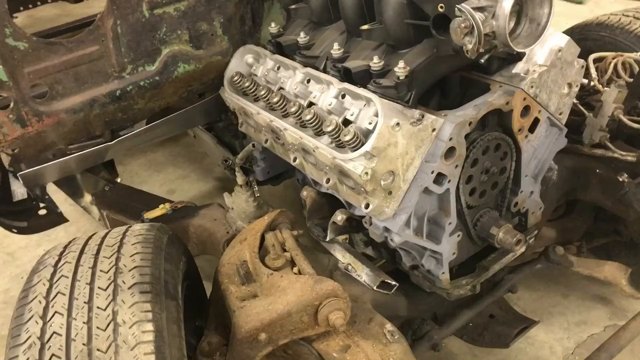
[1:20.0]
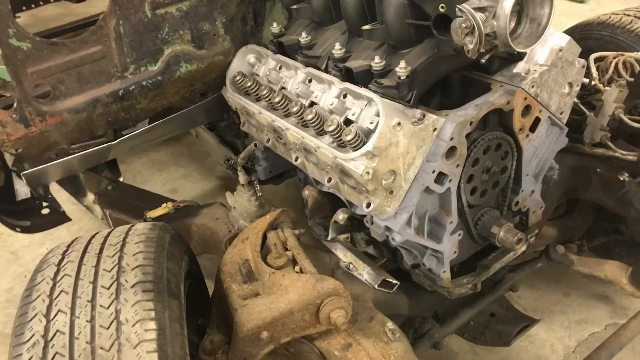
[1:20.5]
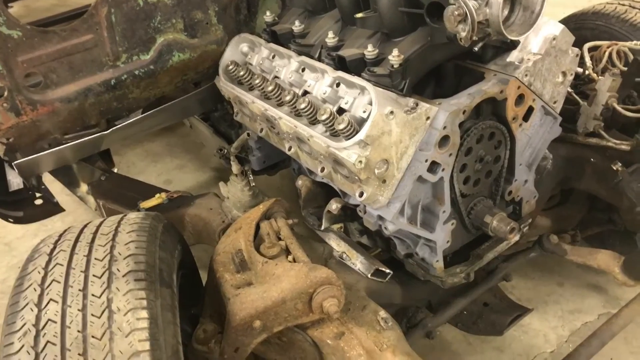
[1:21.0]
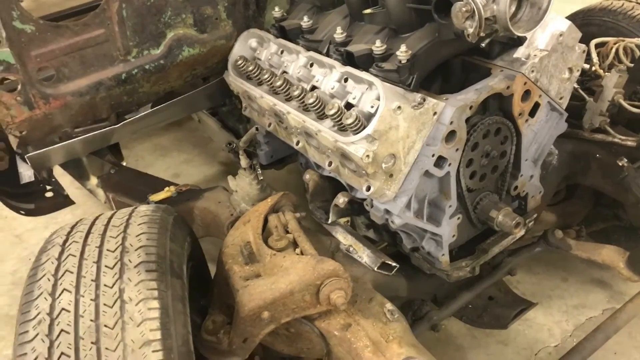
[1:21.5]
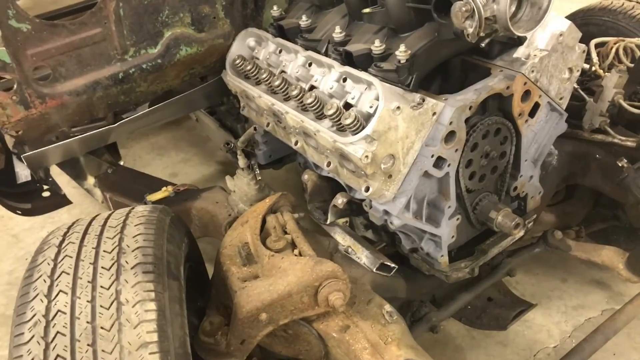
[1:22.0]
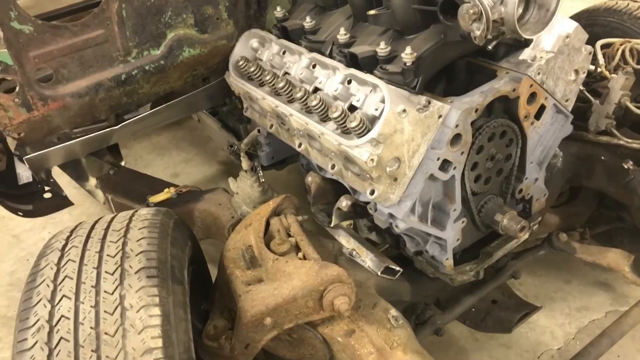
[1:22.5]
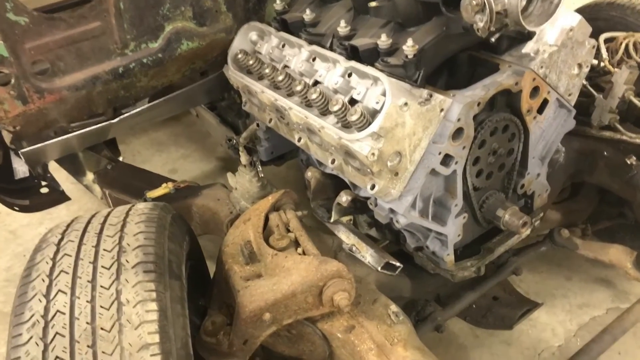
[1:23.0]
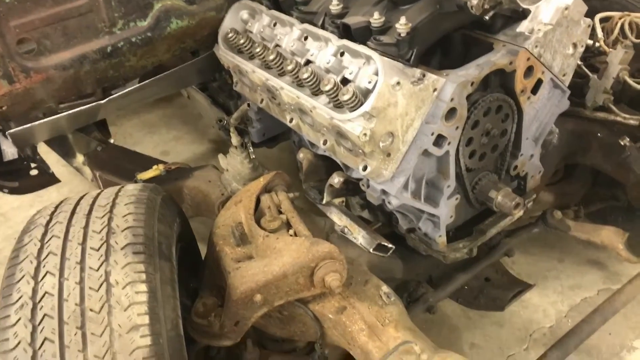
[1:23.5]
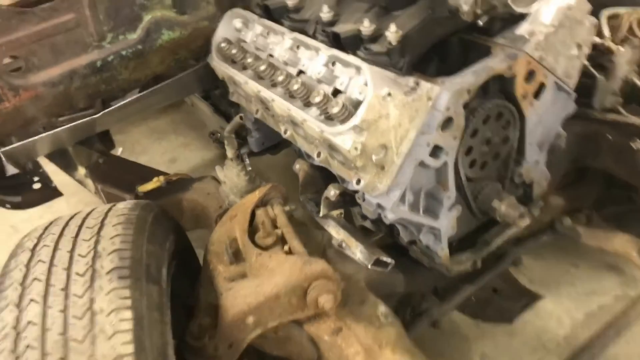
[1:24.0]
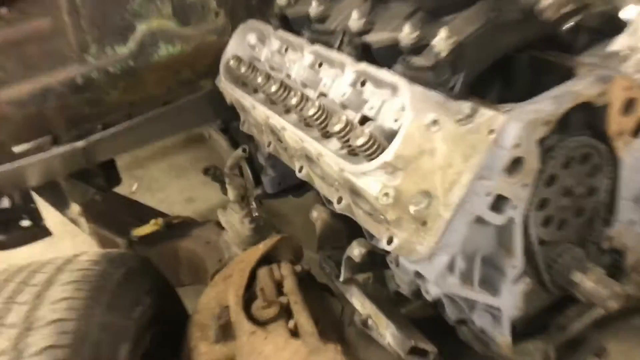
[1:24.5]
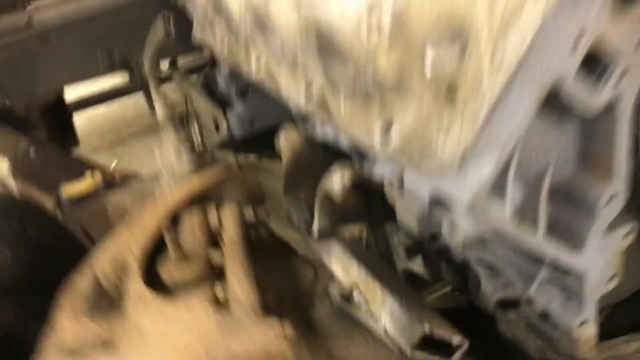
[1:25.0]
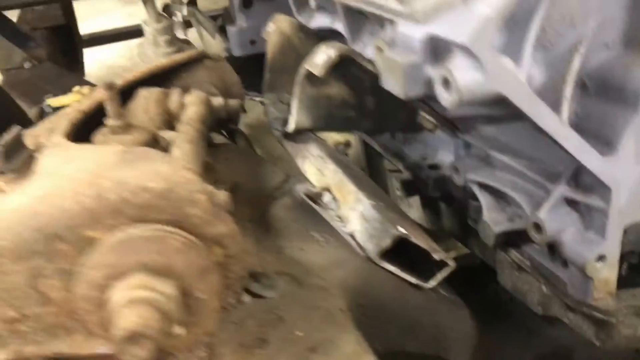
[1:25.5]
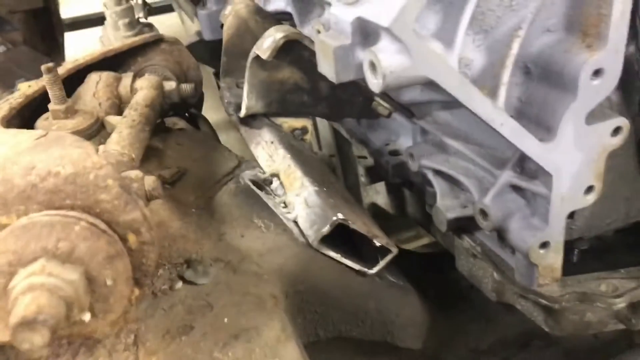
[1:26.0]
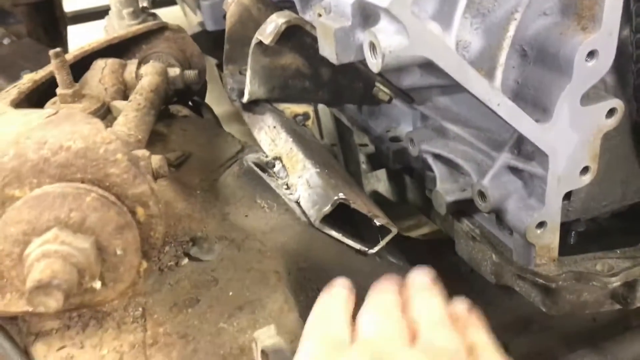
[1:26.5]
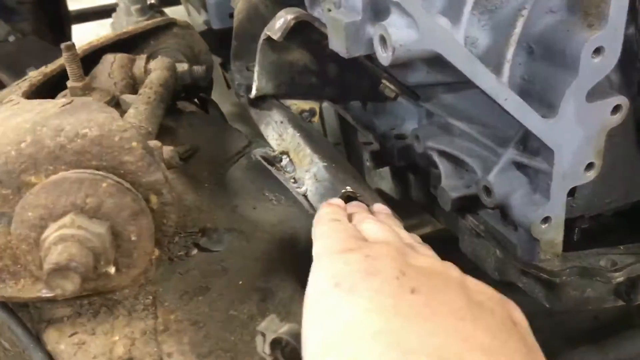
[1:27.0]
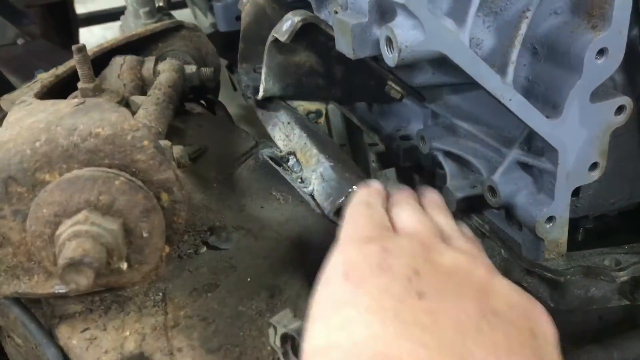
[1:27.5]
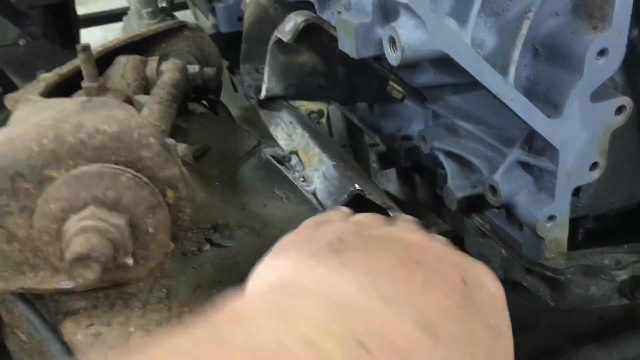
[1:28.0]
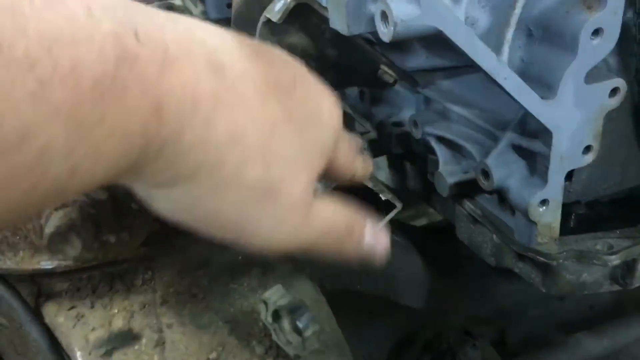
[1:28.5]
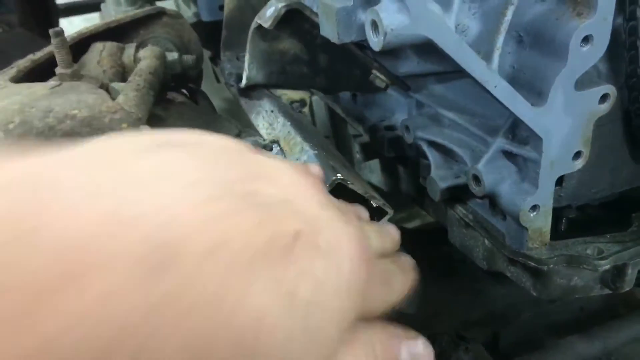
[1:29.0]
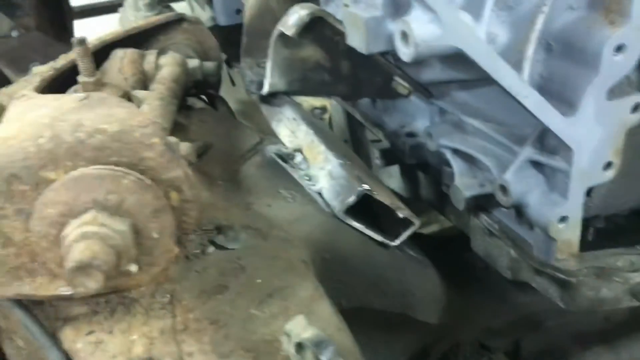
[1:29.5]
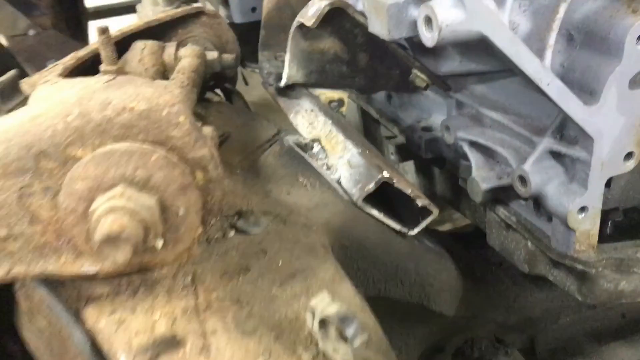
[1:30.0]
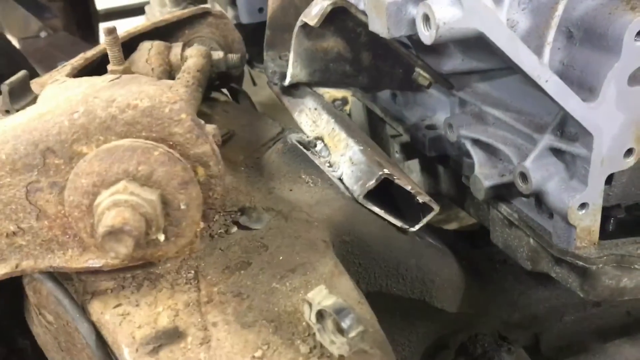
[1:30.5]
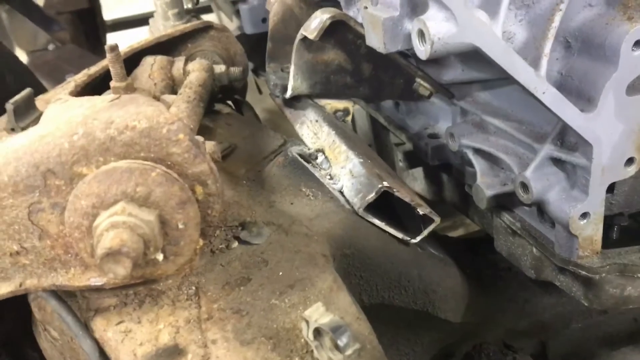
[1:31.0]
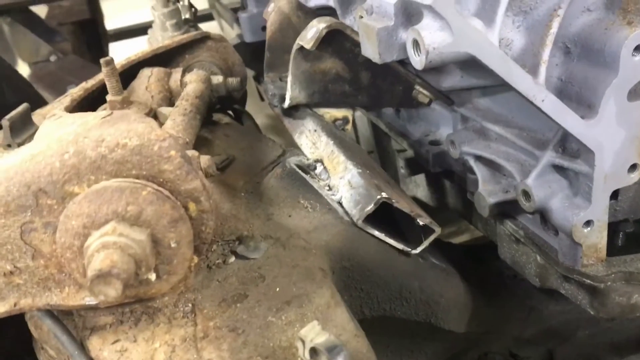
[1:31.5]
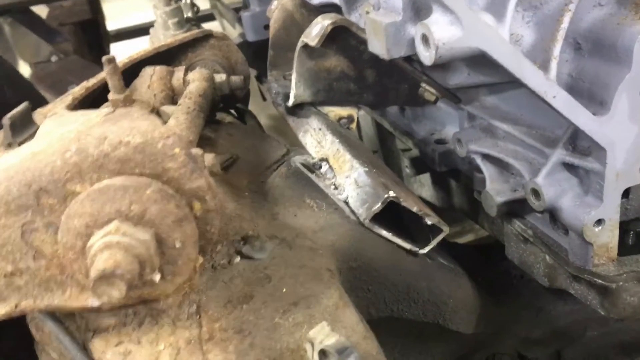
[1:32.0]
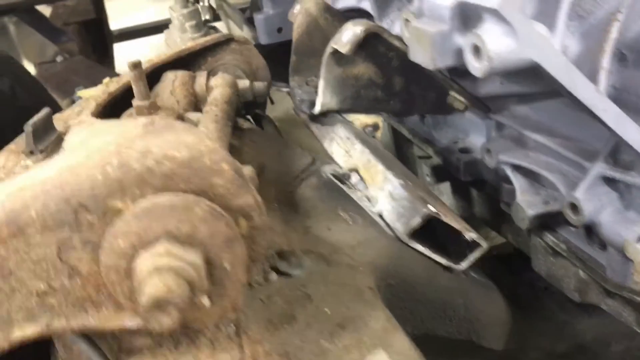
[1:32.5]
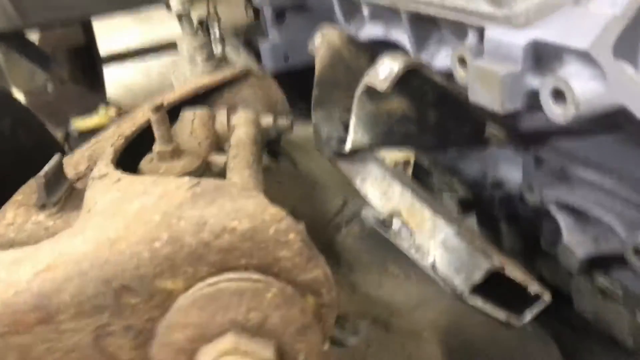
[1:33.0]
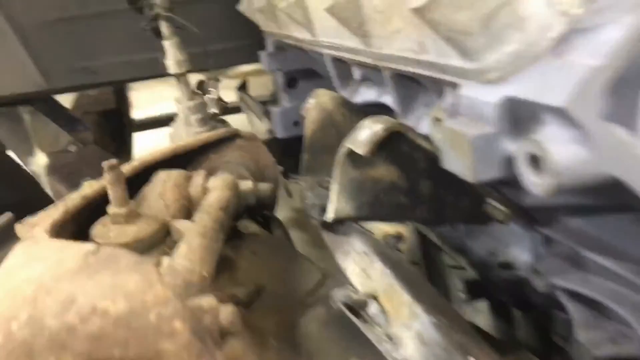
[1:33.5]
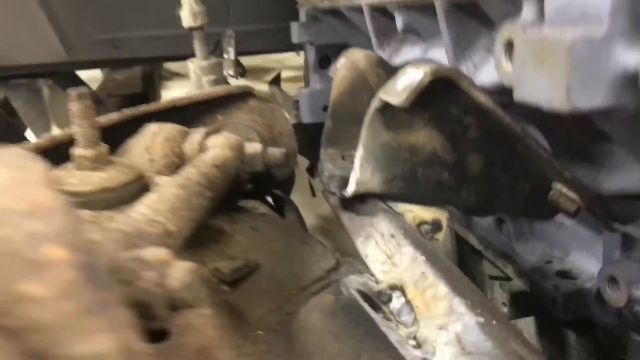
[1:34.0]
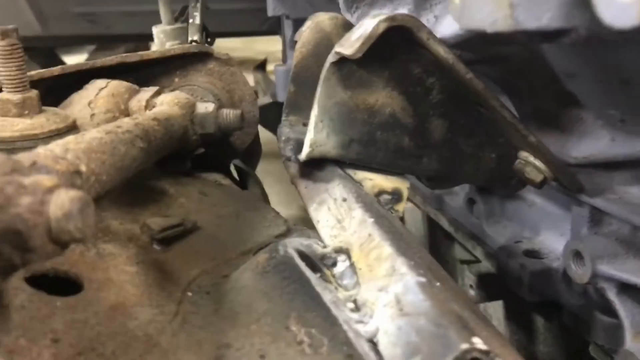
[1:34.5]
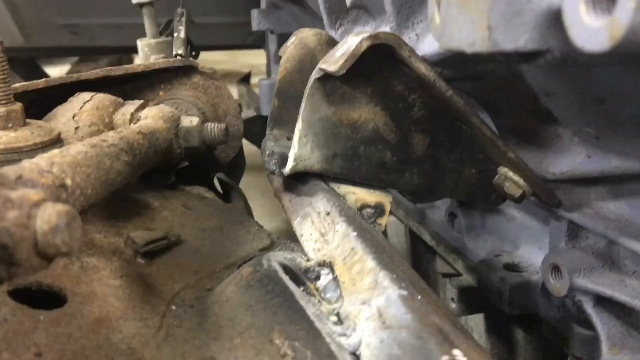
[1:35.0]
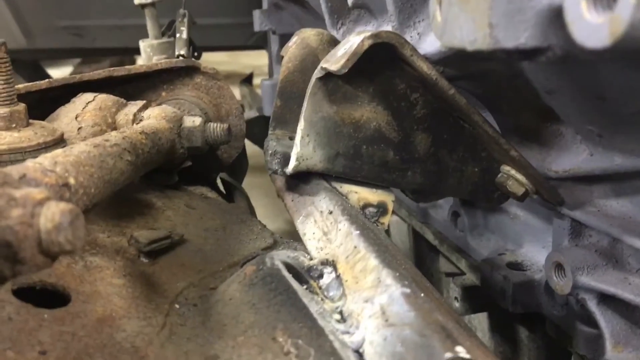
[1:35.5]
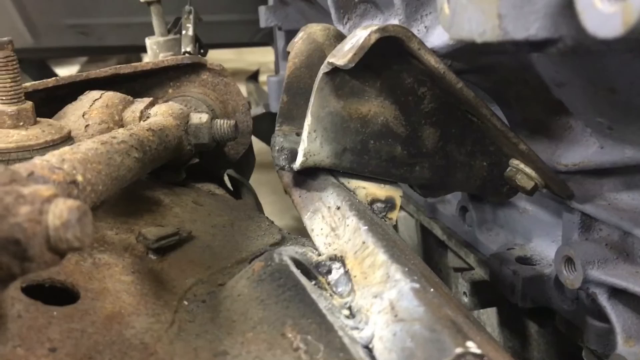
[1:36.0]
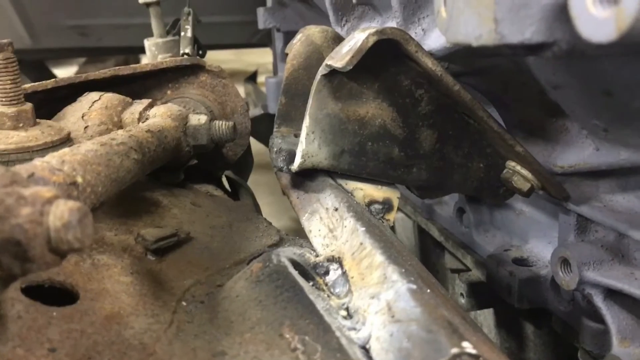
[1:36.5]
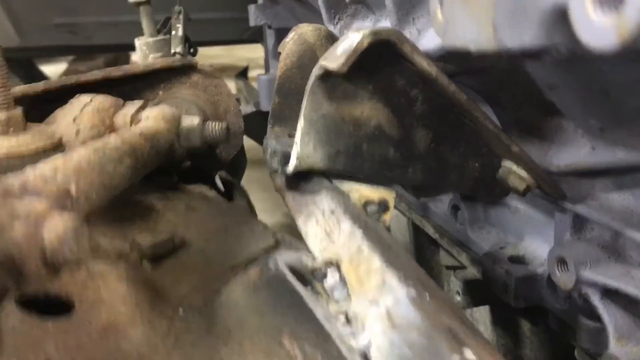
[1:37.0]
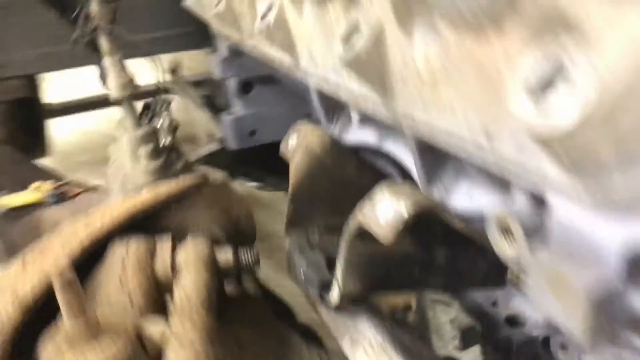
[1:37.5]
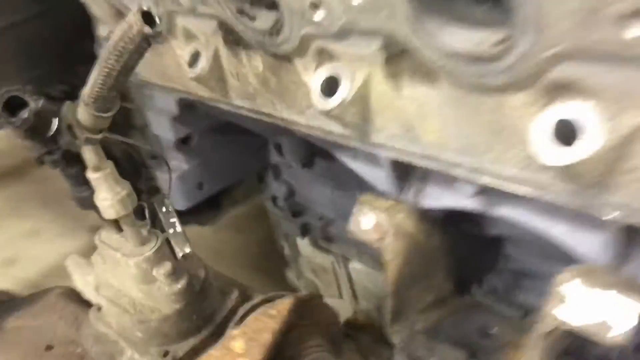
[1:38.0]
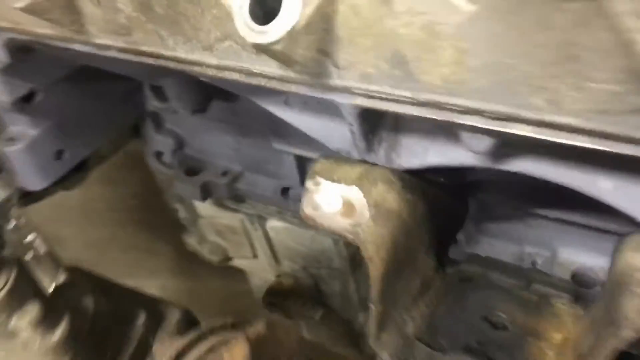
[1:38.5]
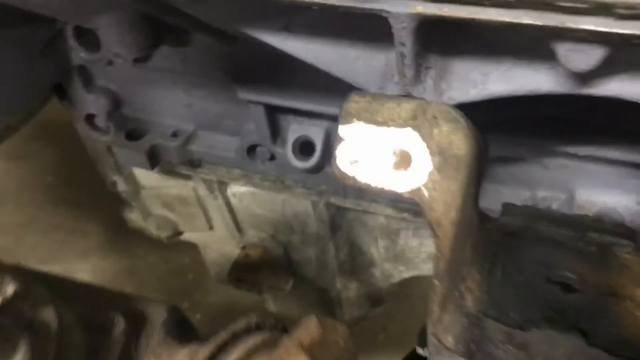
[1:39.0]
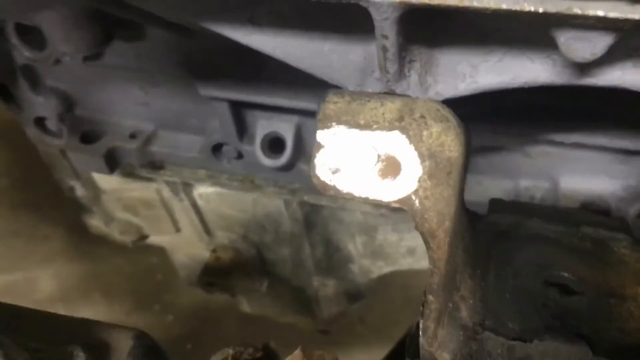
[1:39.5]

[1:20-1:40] The view begins on a close-up of the engine area, with two front tires also visible. The hood is completely gone, as is the body area that would connect to the hood. Parts of the undercarriage look corroded and rusted out. The engine doesn't look too bad, but other parts are definitely missing. The camera zooms in up under the engine. A hand comes out and points to an area under the engine, and the camera zooms in even closer, then out and to the side. The tires are somewhat worn and the tread is low. The main engine area is intact, but the pieces that would surround it are missing. The bolts and screws are corroded. The truck looks to be very vintage and old.